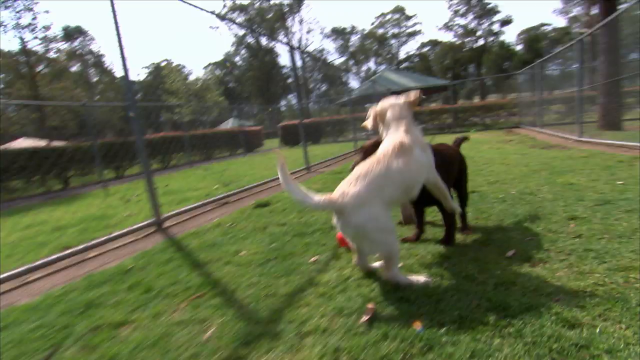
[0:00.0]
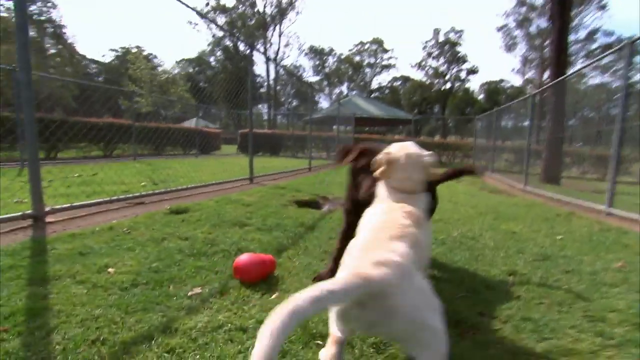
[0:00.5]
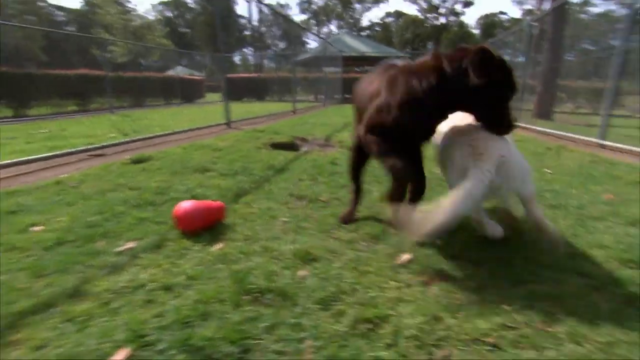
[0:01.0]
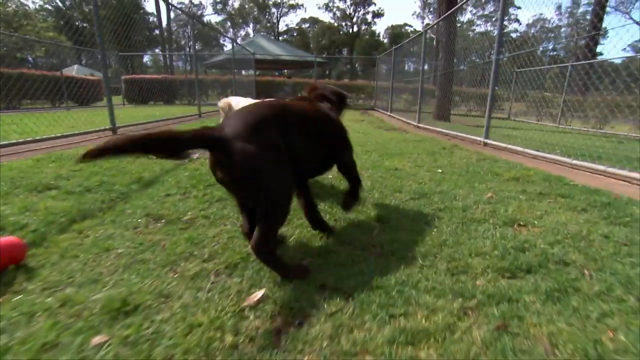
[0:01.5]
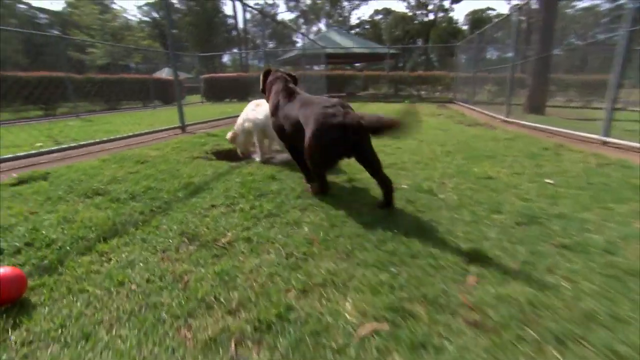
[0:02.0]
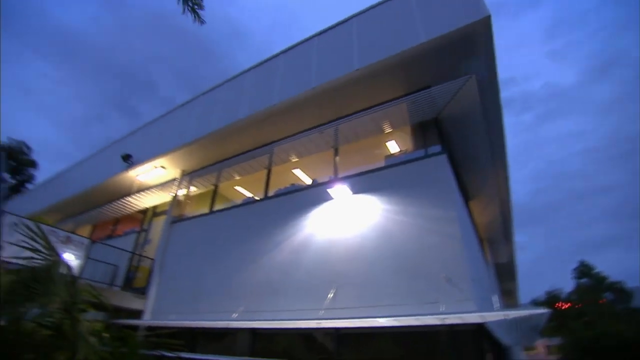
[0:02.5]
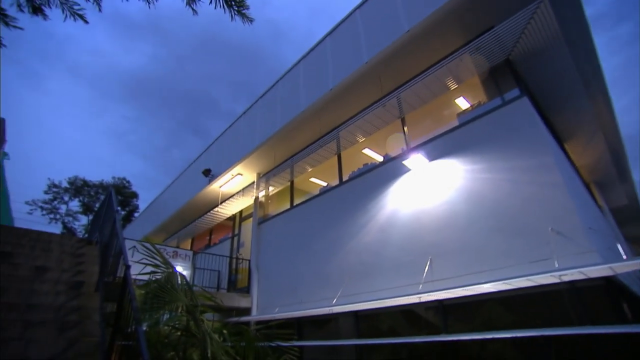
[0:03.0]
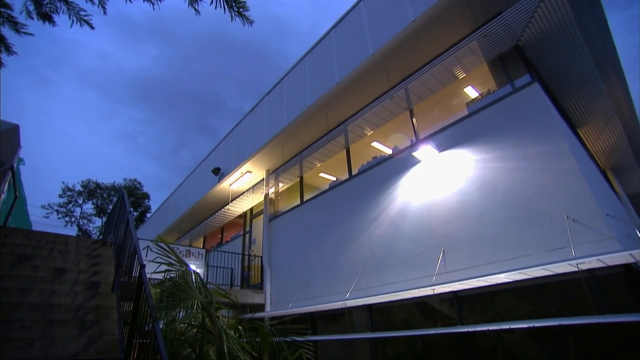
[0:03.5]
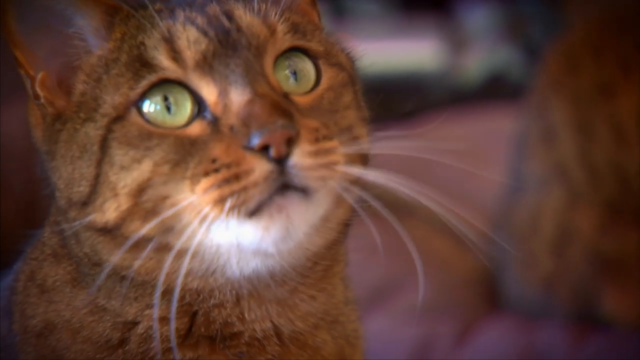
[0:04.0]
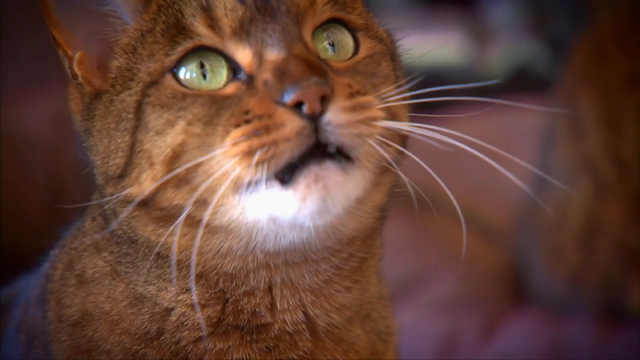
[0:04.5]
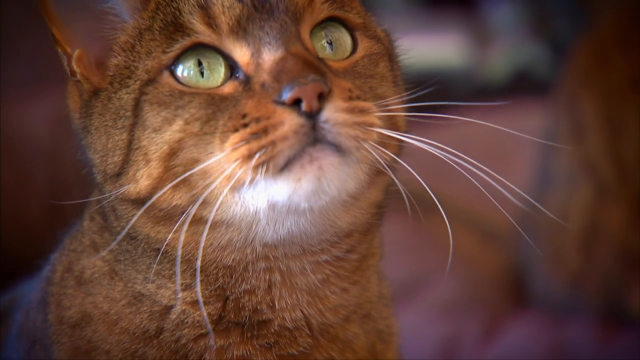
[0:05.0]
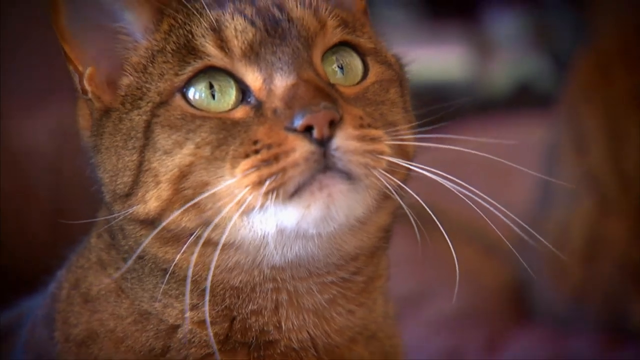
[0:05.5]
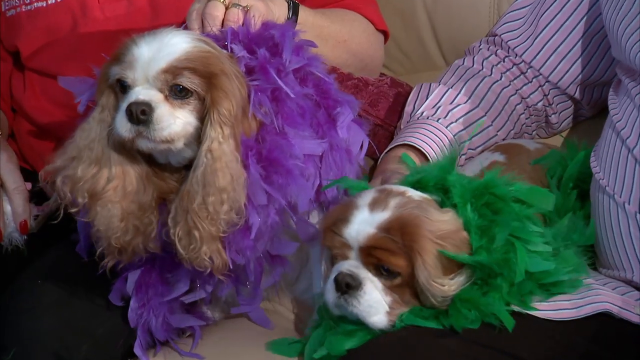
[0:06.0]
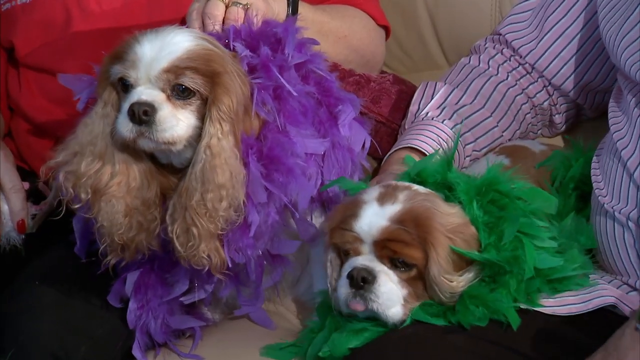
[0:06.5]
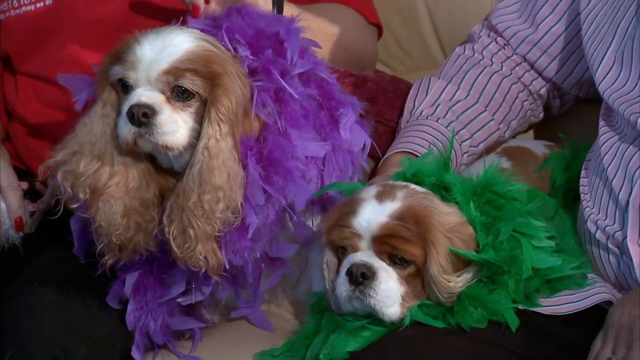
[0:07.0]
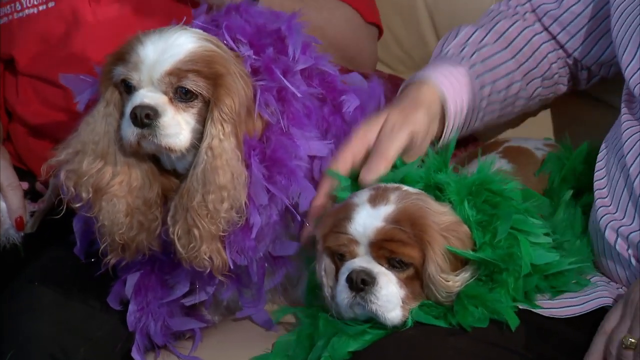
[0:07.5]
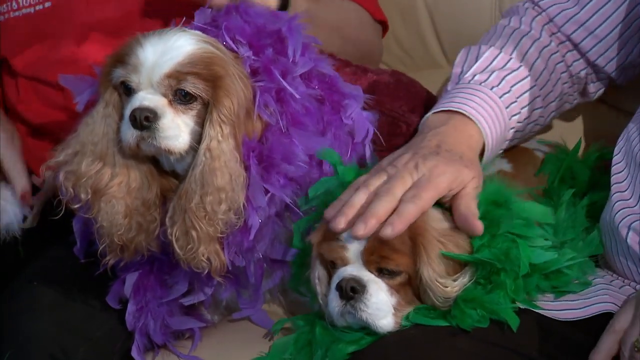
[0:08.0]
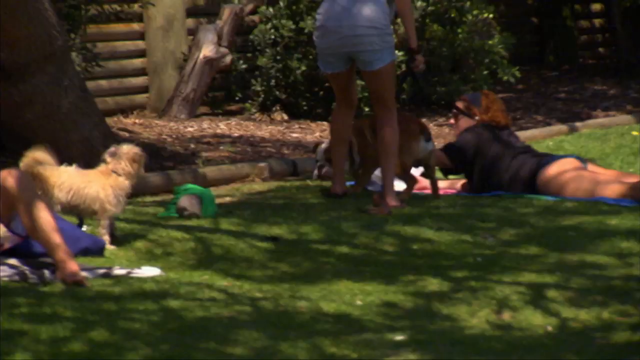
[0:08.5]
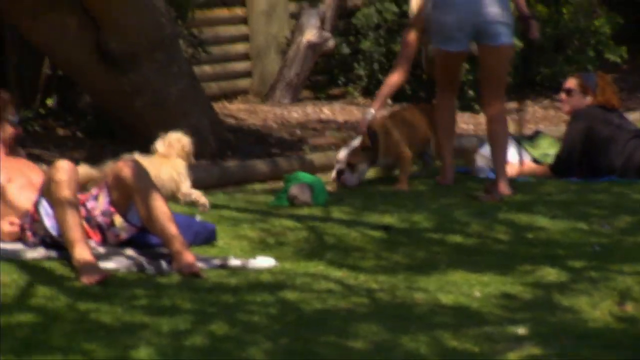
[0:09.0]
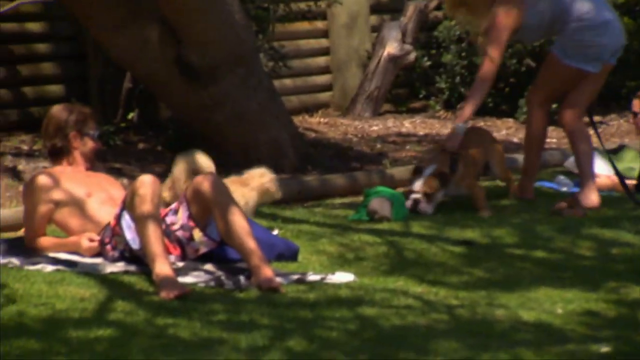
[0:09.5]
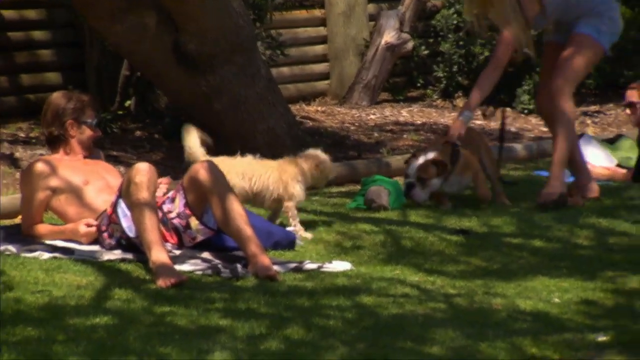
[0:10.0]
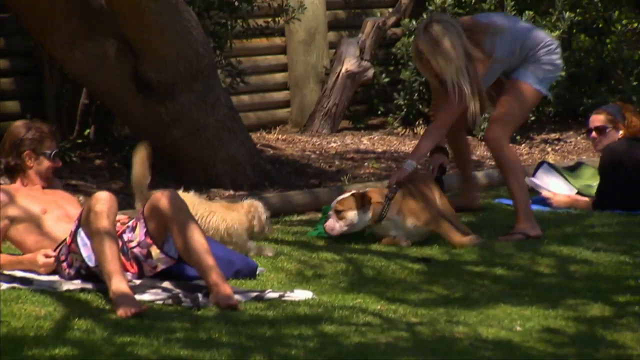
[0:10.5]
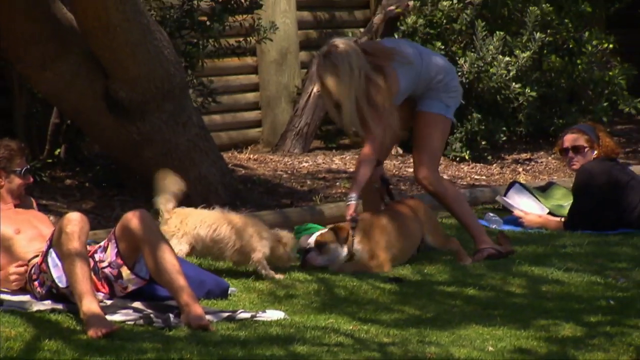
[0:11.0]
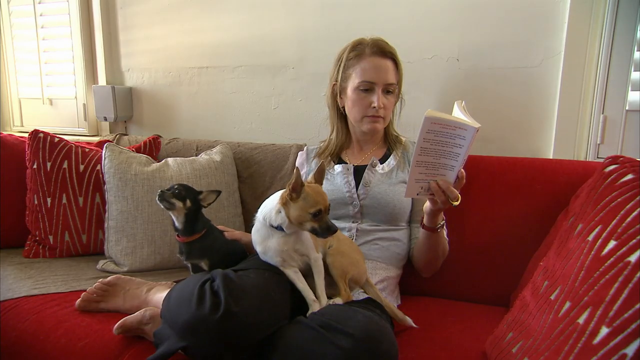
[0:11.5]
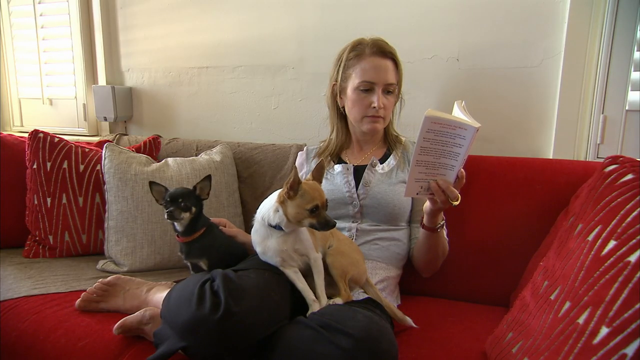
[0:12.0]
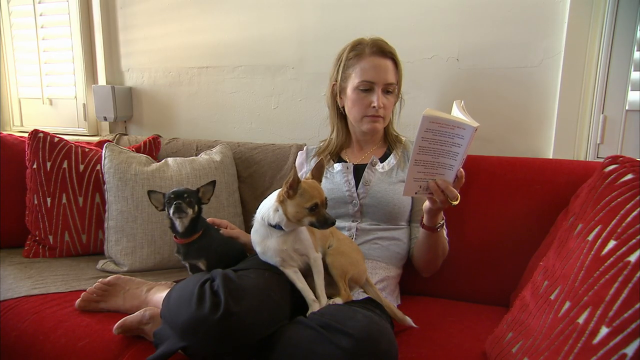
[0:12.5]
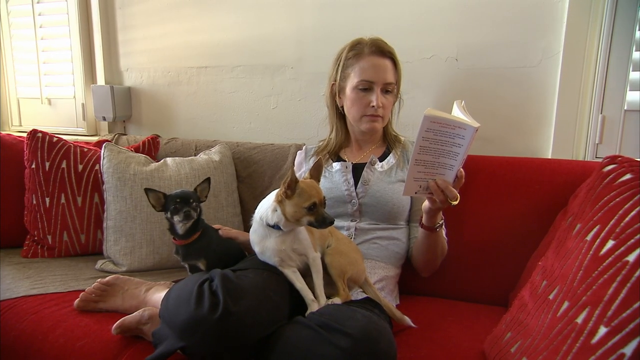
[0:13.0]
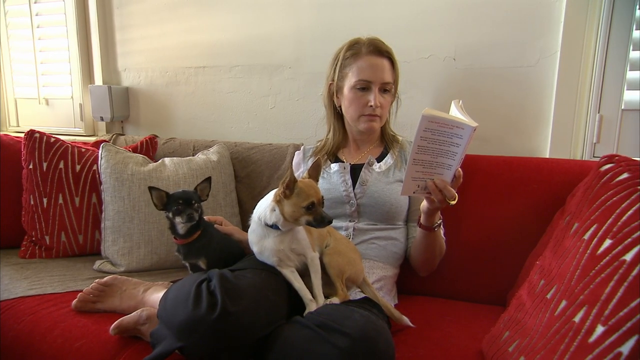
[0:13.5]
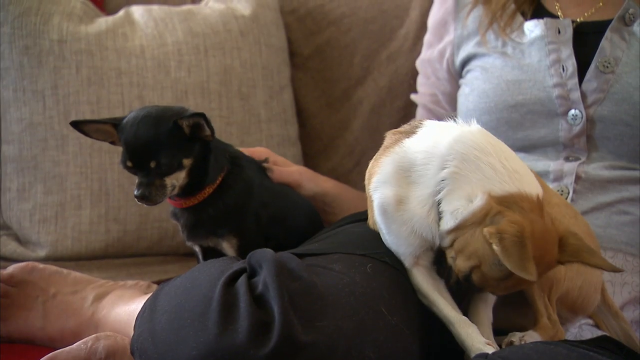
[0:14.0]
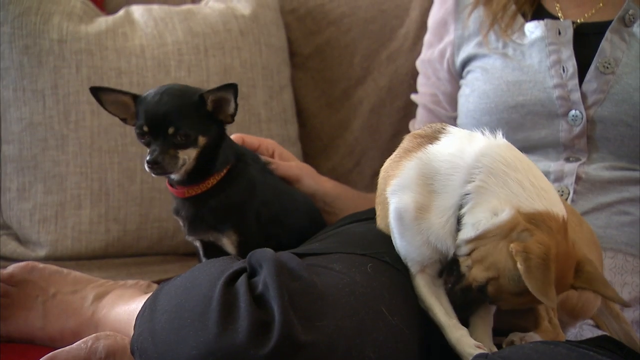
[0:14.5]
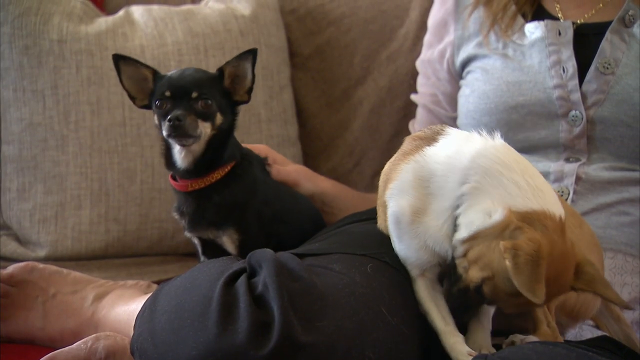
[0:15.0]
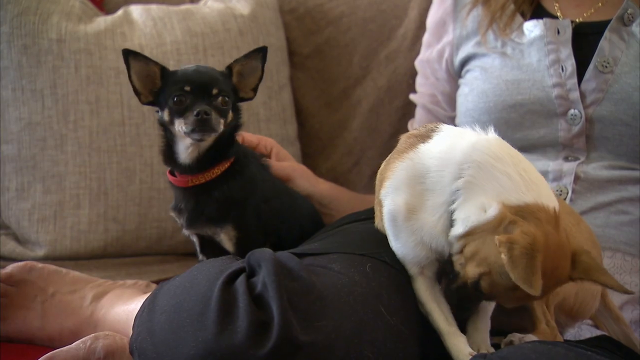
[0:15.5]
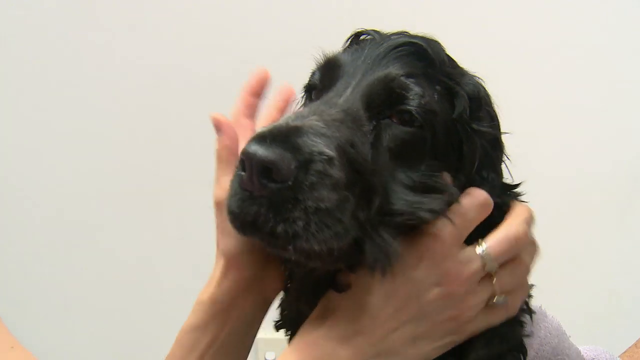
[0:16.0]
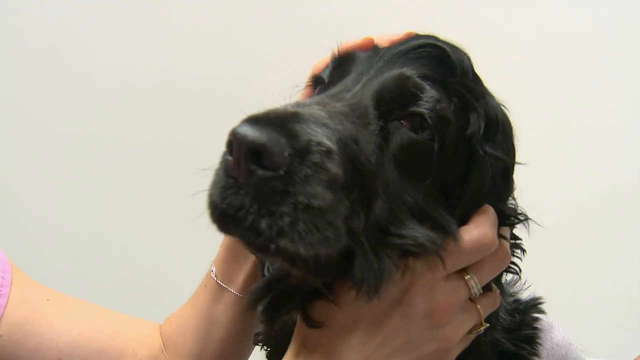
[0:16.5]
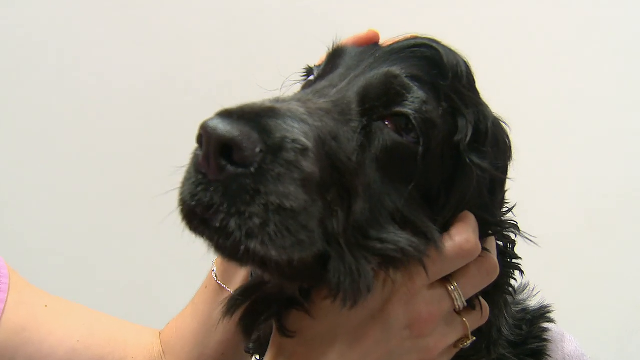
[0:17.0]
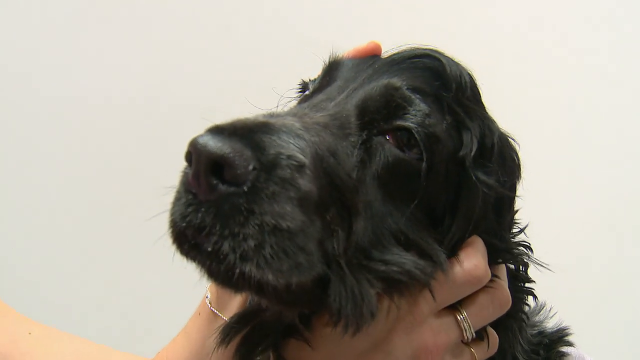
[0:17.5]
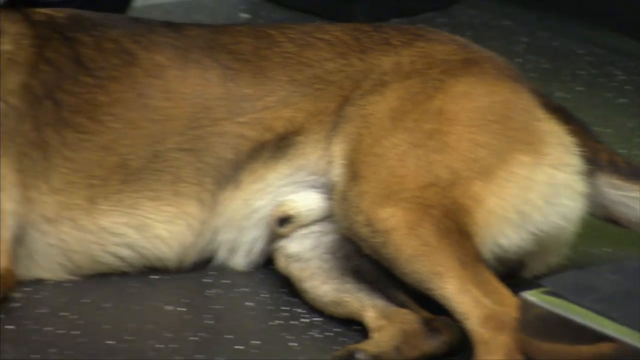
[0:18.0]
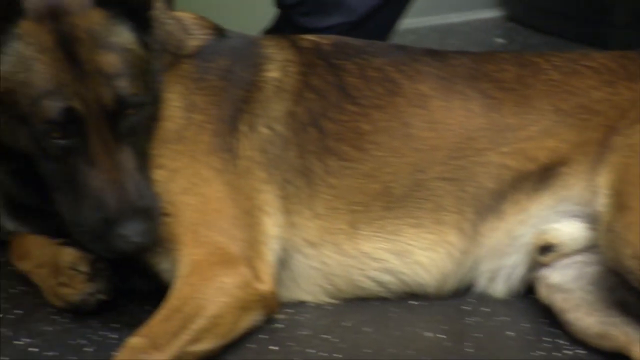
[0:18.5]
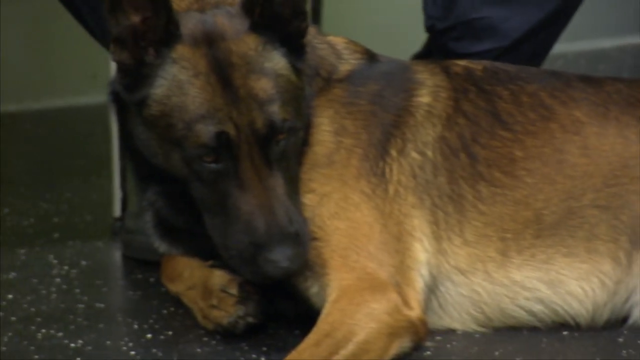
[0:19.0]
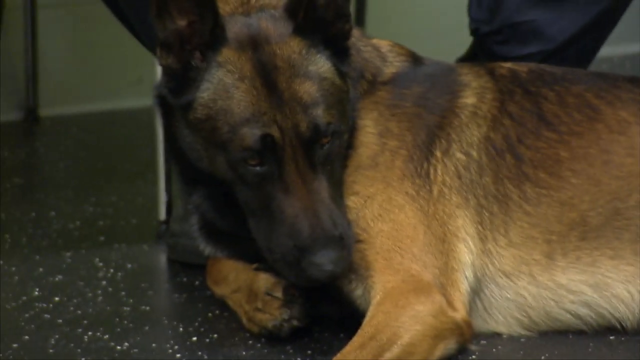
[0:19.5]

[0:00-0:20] Different types of cats and dogs appear, and they are happy. People are with their pets; some of the dogs are very small and others very big, and they play on the ground. Some dogs try to fight with each other while the owner tries to stop them. Dogs relax on a woman who is busy reading her book. A dog sleeps on top of its owner's legs, looking relaxed. A big house is shown. Two dogs play with a ball together, and one dog is dressed in a certain type of clothes.